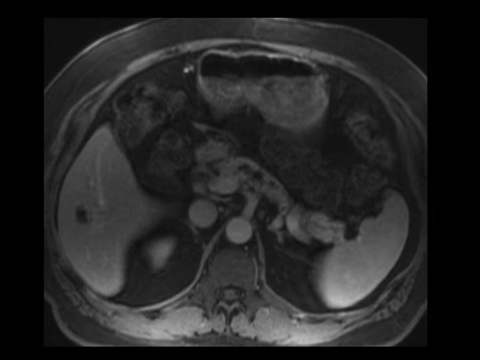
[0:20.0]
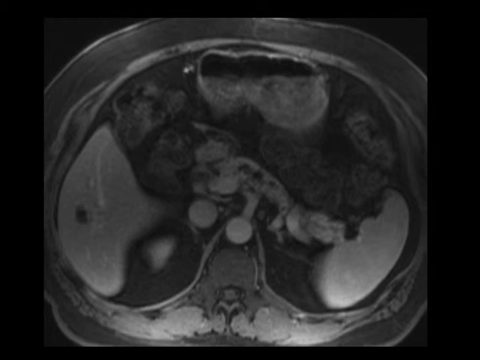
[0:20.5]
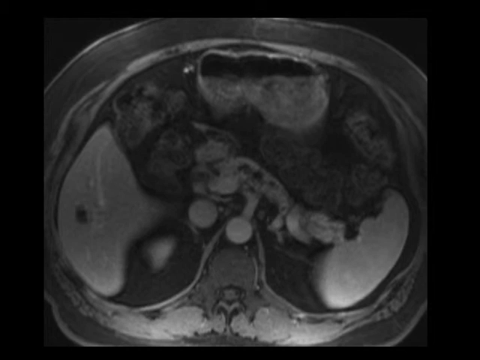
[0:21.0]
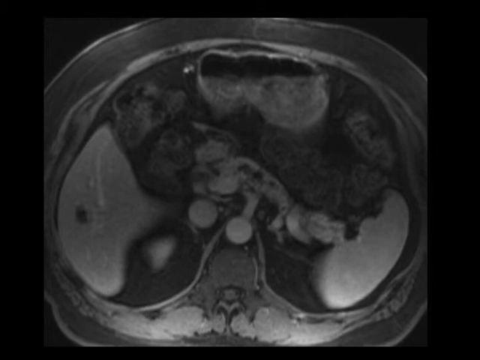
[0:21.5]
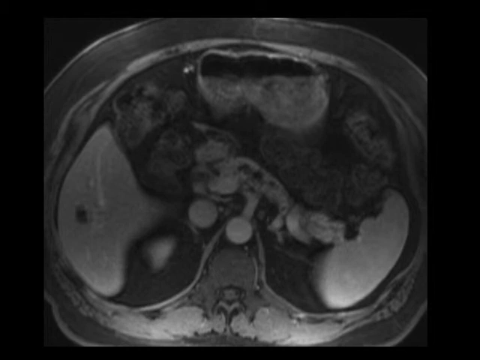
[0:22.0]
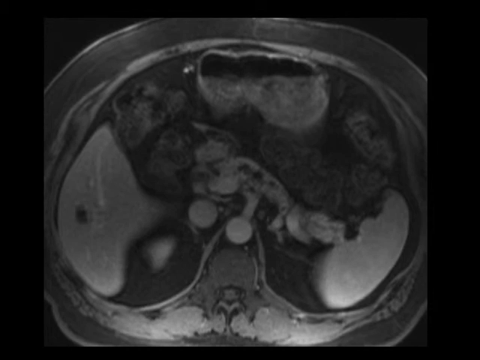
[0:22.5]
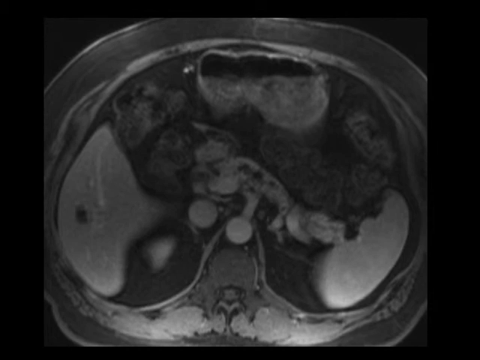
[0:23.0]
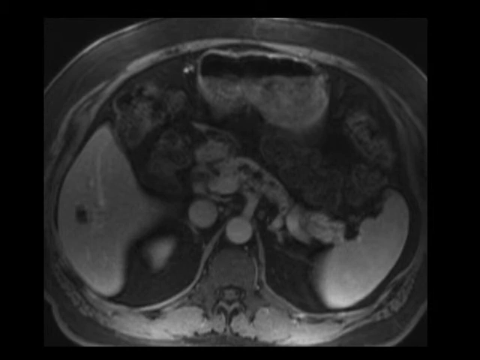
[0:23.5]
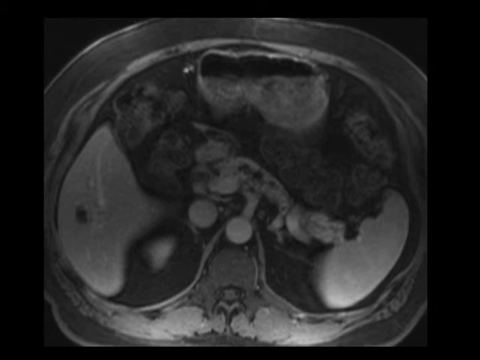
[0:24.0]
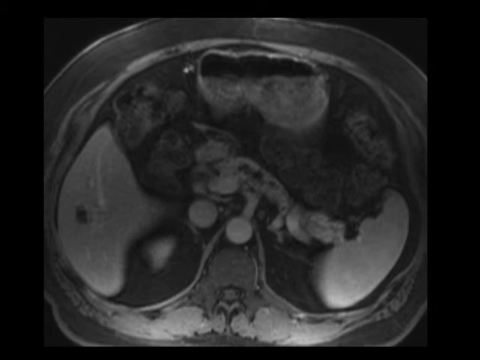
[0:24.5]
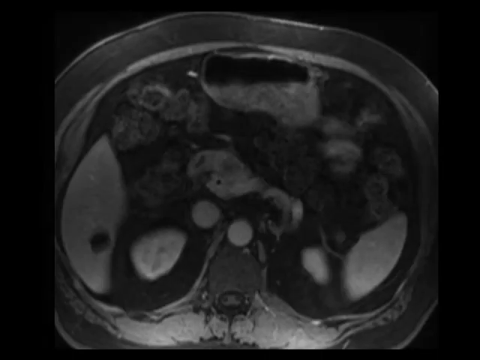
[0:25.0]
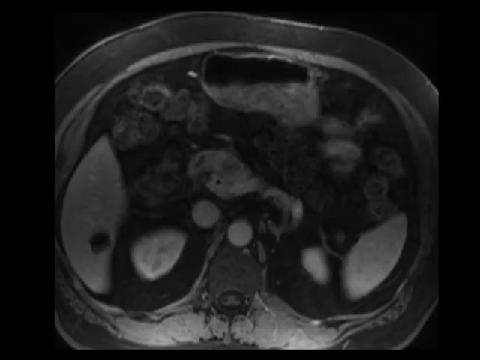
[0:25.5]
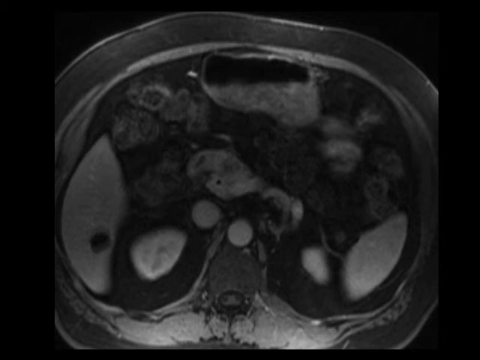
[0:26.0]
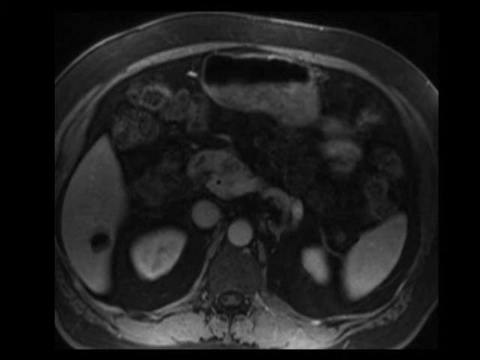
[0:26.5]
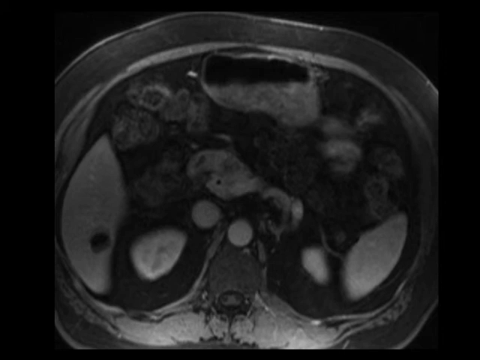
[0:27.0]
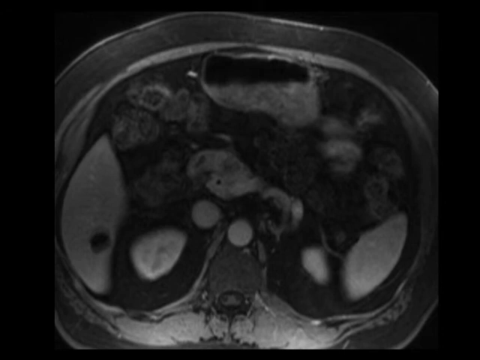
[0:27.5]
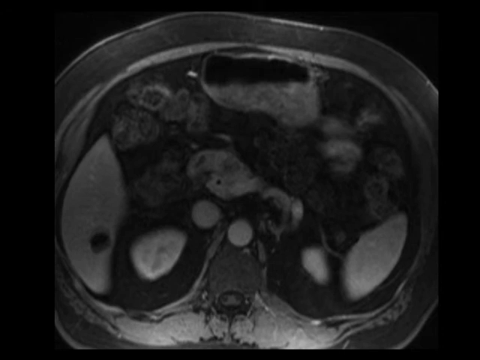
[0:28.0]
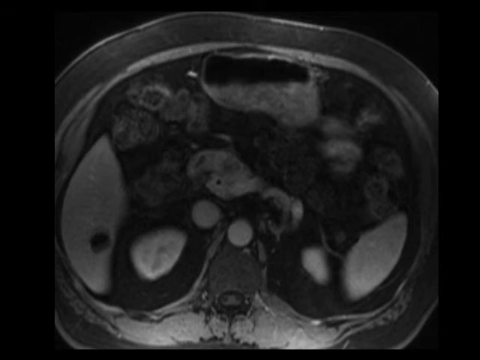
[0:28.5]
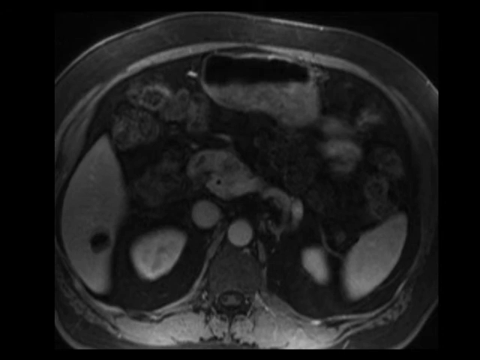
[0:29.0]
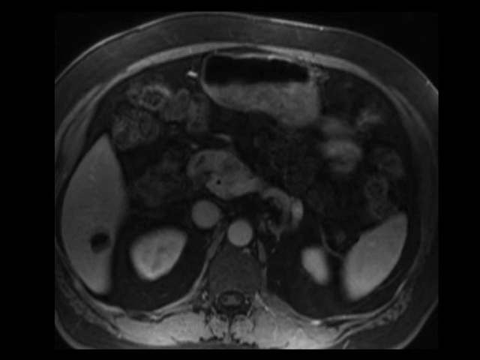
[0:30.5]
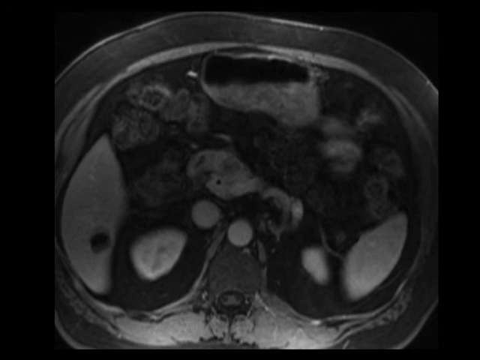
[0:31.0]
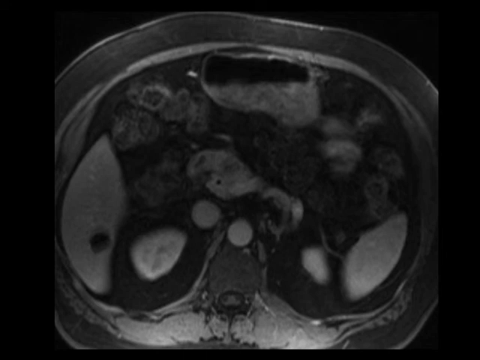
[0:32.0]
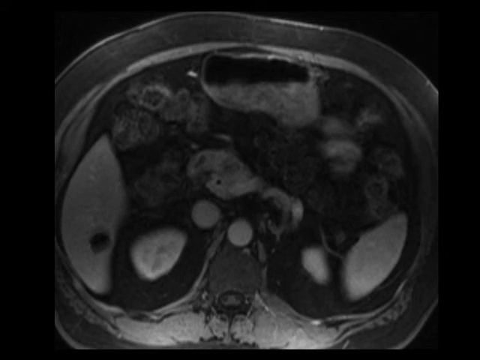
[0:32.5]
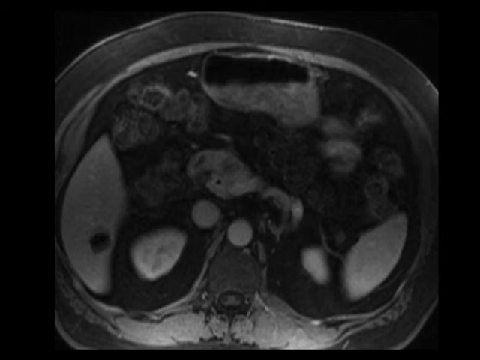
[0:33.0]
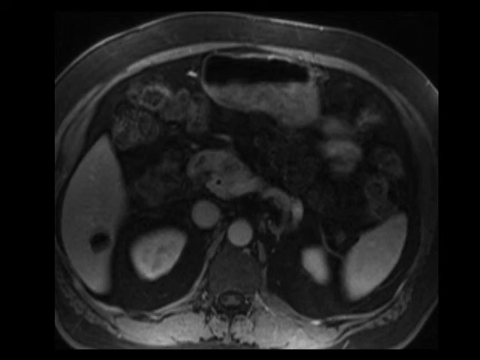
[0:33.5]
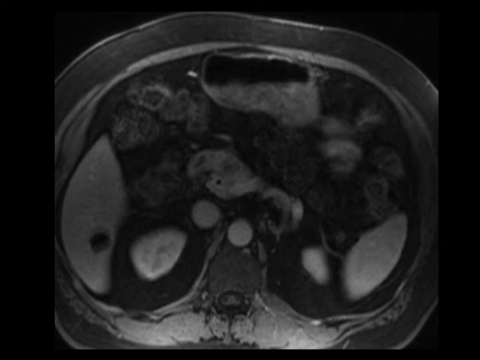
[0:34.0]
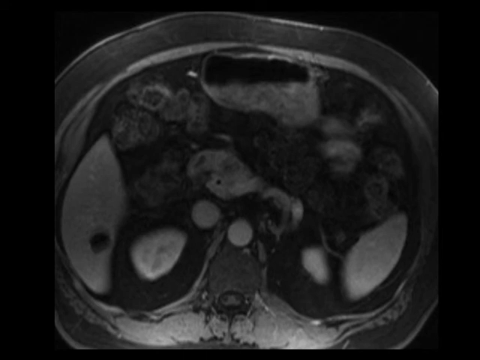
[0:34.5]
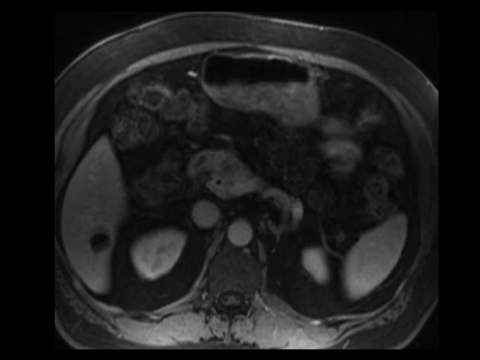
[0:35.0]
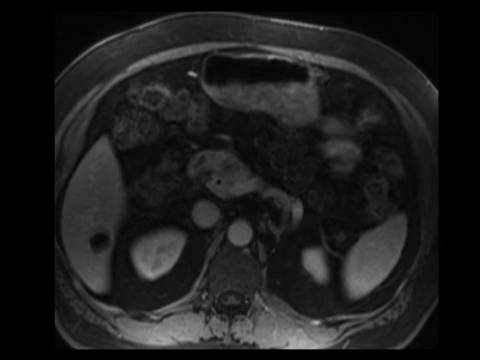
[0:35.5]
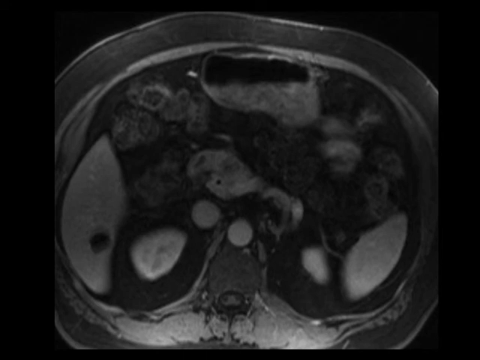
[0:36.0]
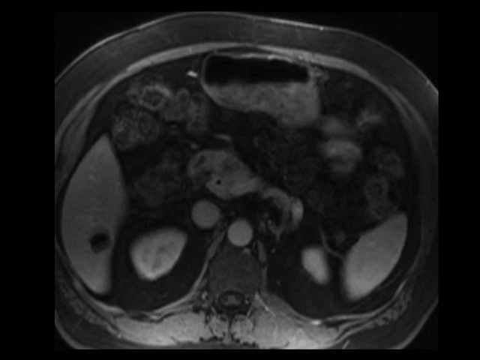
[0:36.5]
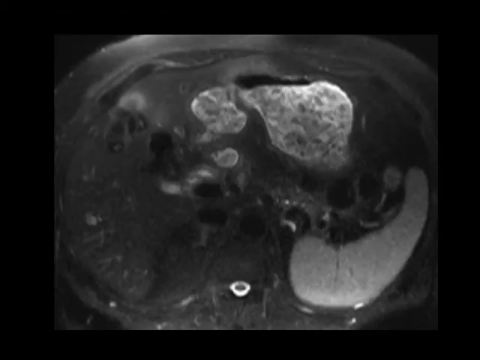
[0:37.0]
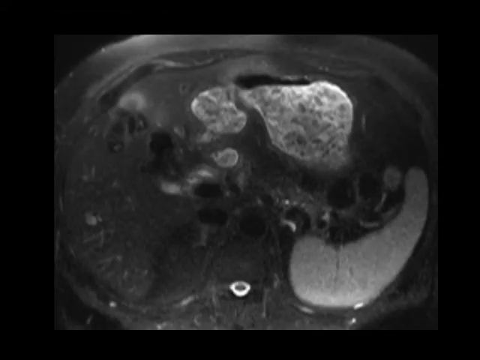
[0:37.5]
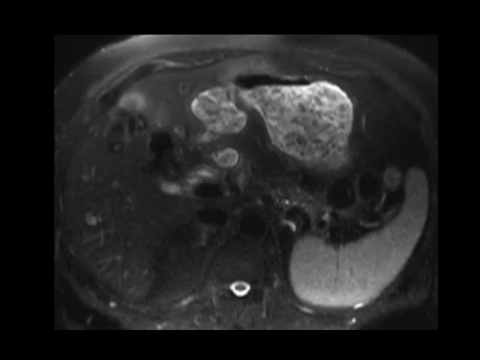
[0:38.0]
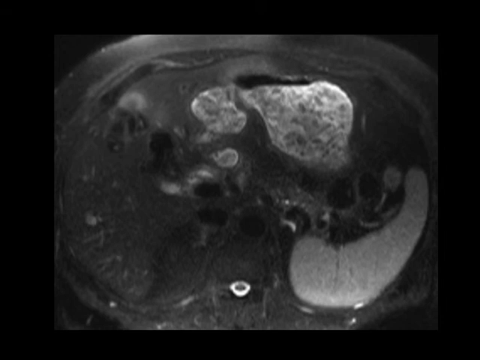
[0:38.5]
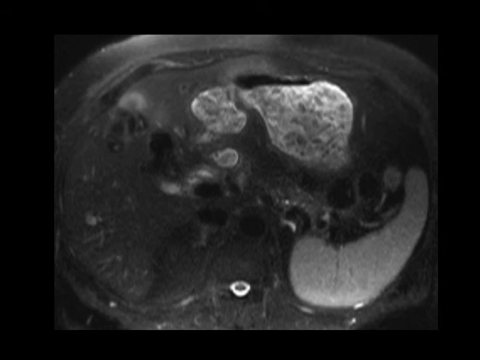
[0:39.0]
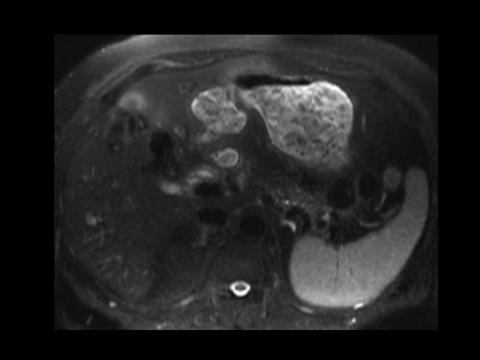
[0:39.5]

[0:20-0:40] The same image continues, with a couple of organs that seem inflamed and enlarged. The image then changes a little, appearing to show a different timeframe, though no date or time is shown. There is more black, and the objects on the left, right and top are not as widespread as before; they have shrunk a little, whereas before they covered a good chunk of the sides. The image then changes once more, and it is hard to tell whether it is the exact same thing. Gray has taken over the left side, there is a little white near the top that extends a little toward the right at the top, and the right side has some white as well. The rest is gray. It looks like something has invaded the area.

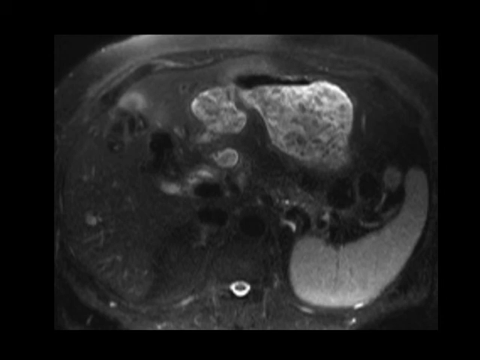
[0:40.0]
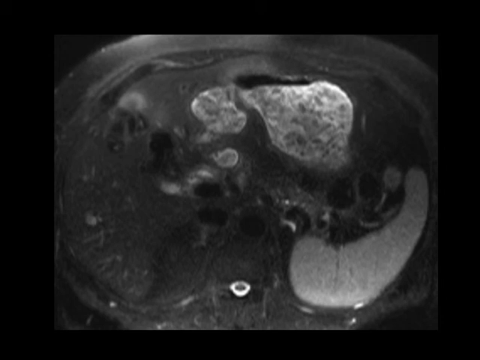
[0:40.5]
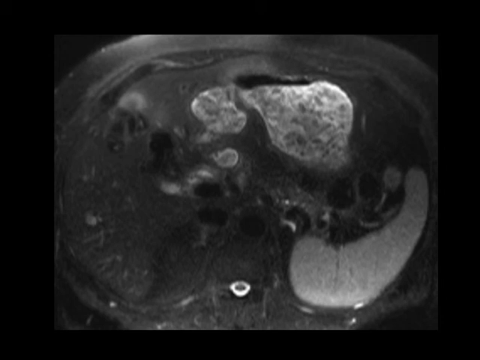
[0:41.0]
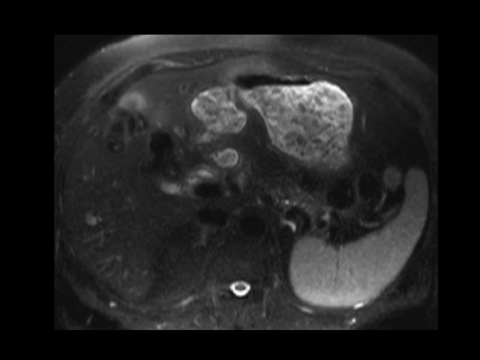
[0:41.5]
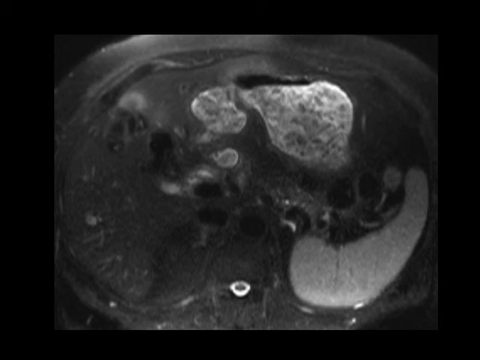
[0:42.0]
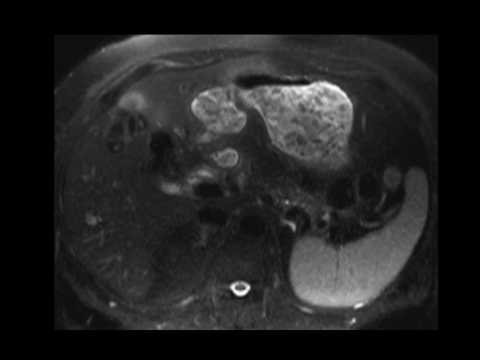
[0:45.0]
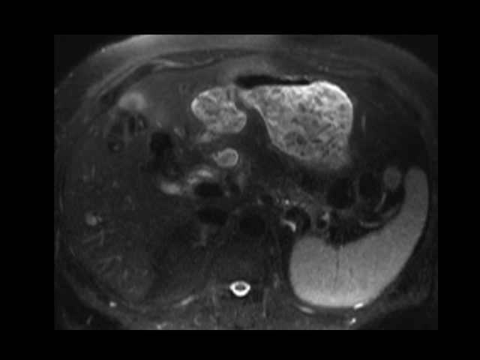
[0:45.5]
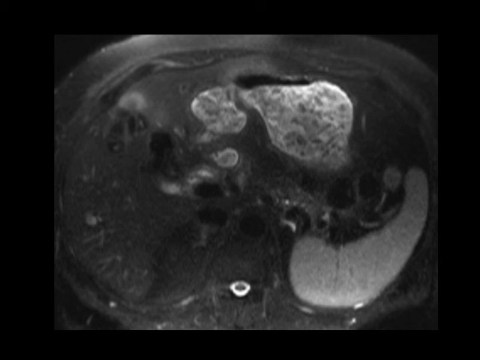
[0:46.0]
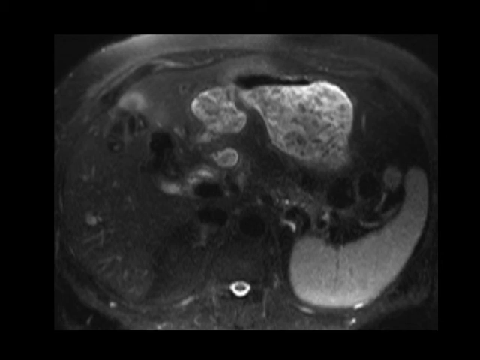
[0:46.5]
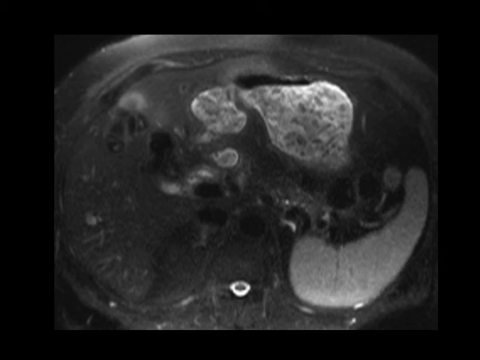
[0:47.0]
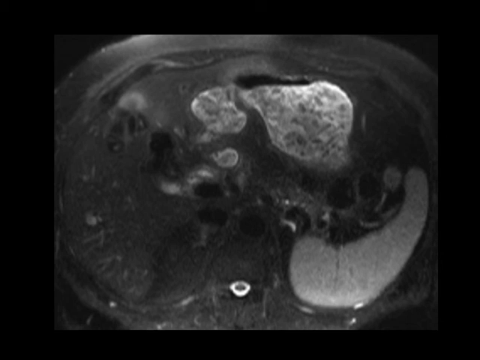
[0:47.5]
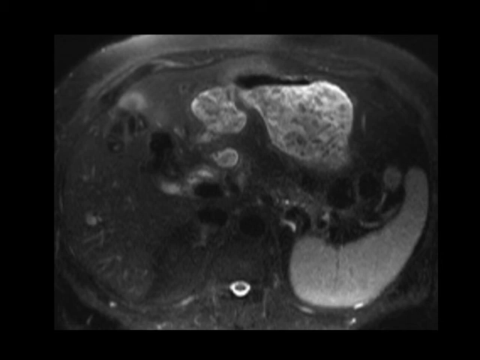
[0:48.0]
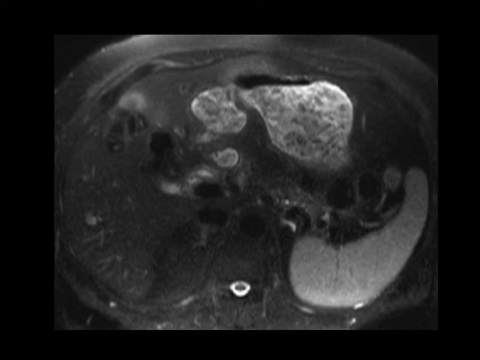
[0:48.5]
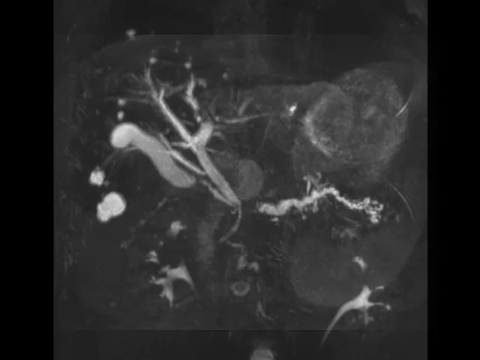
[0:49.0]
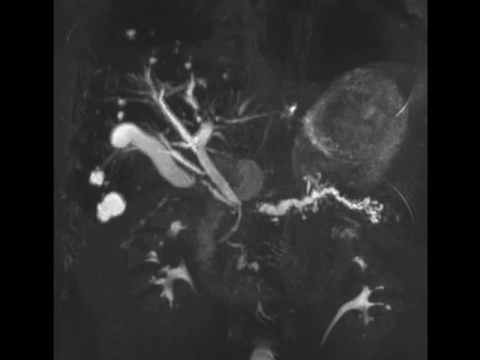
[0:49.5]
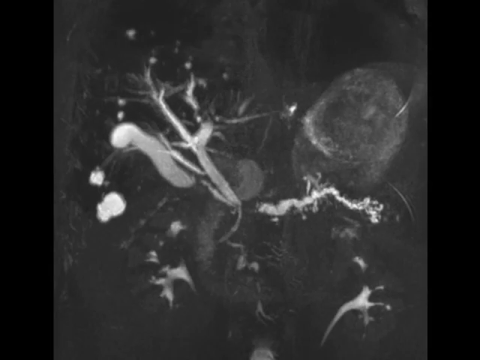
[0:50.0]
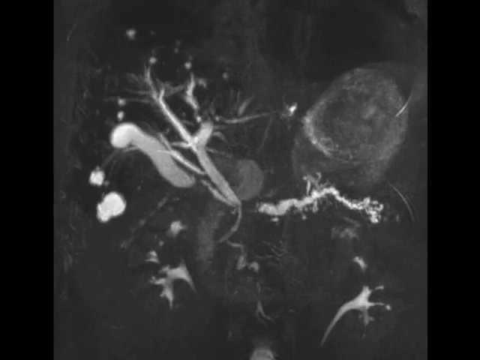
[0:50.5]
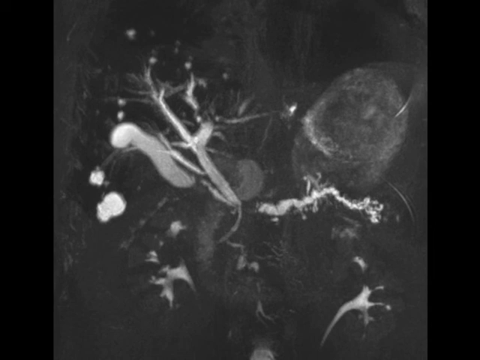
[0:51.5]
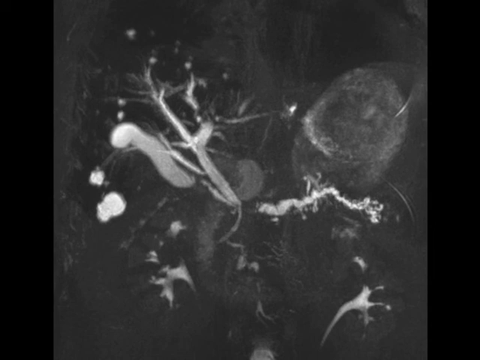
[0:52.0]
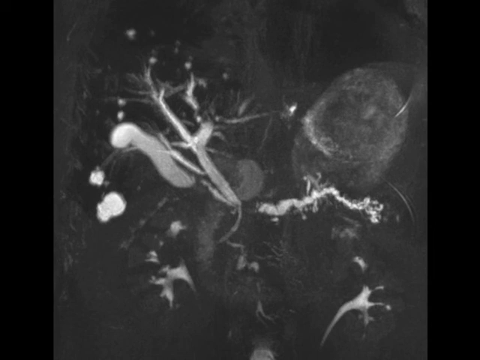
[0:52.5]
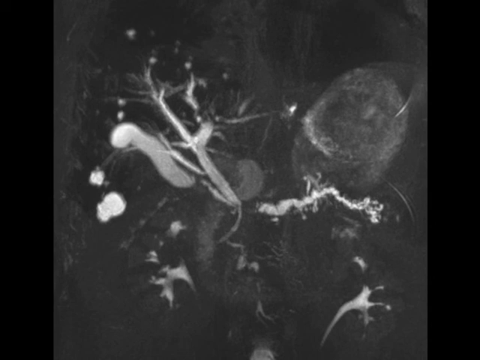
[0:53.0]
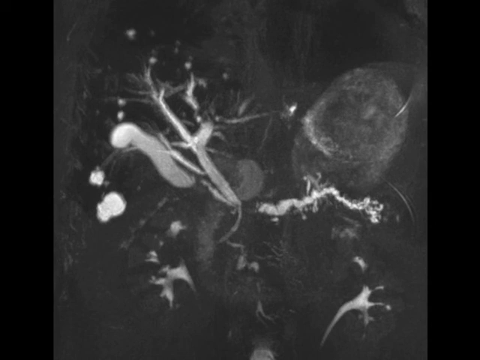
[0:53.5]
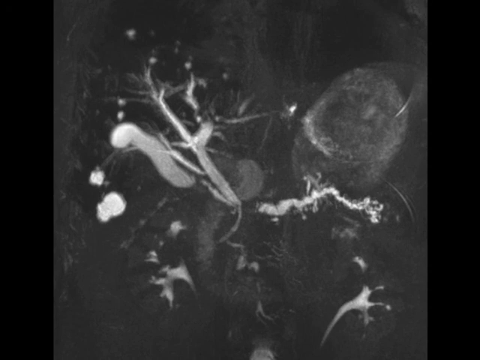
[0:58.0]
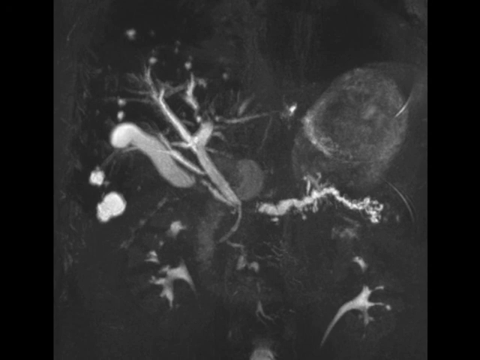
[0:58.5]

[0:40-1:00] The object is largely overrun by a gray mass inside it. The white object at the top seems to have split in two a little, and the white object on the right seems to be kind of sagging down on its right side. There is a lot of gray, and it looks like skin or tissue has connected on itself. The next picture shows many gray and white objects: a couple of white snake-like objects on the left, and a gray translucent object on the right with white lines and some gray in between. The image looks drastically changed, and it is unclear whether it is the same image as before.